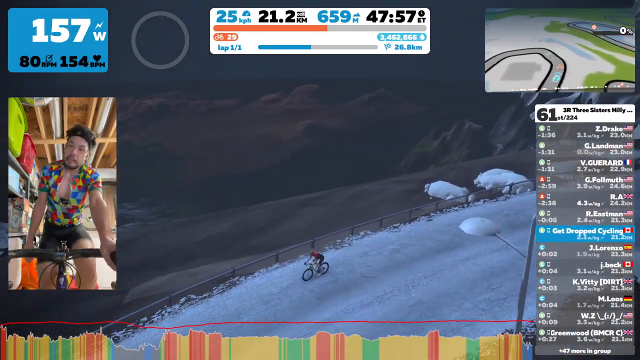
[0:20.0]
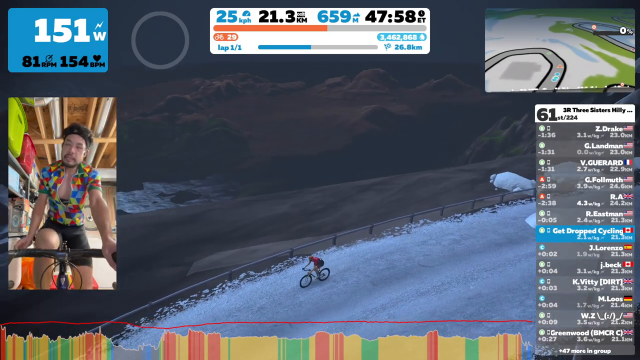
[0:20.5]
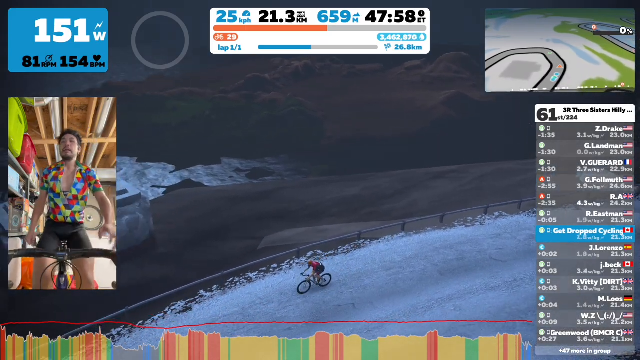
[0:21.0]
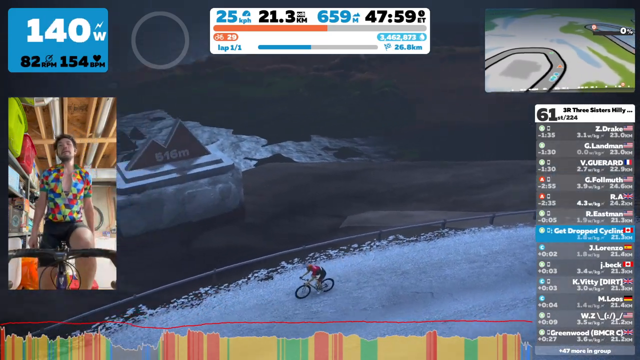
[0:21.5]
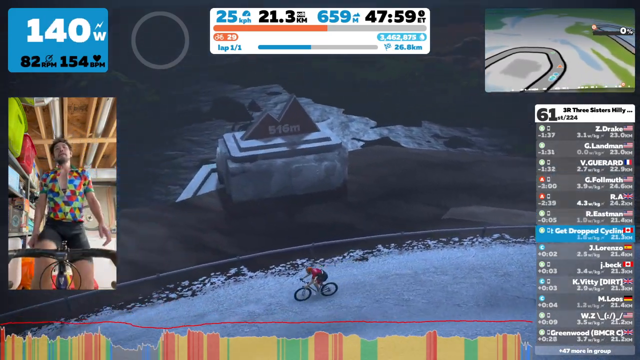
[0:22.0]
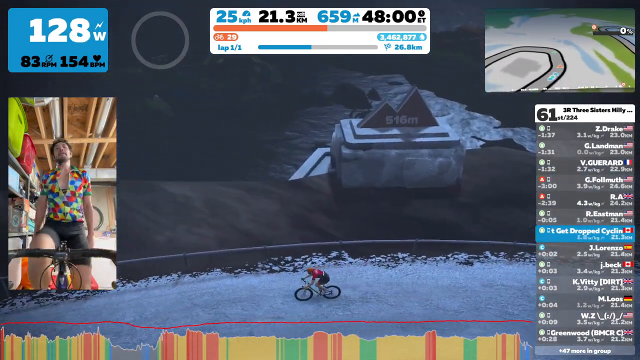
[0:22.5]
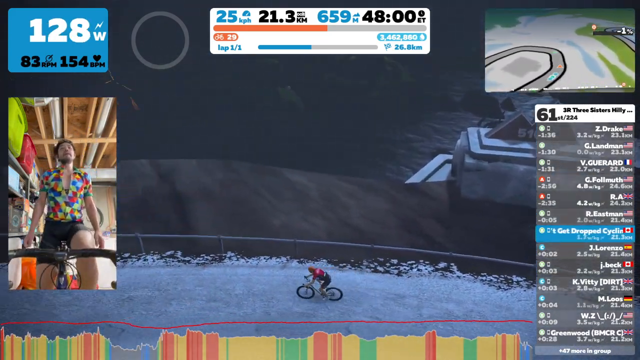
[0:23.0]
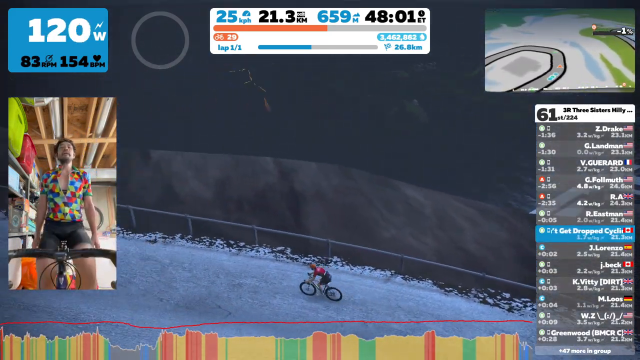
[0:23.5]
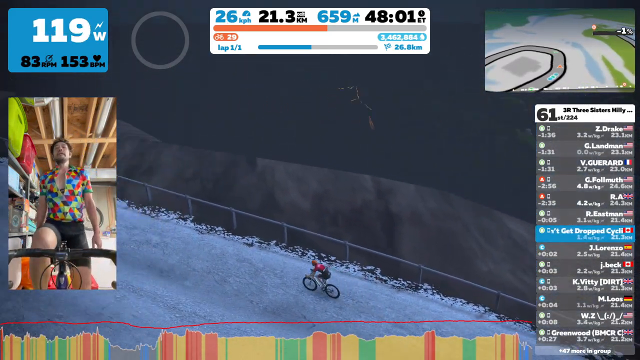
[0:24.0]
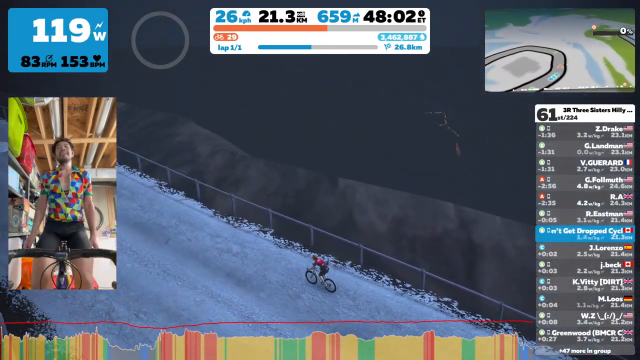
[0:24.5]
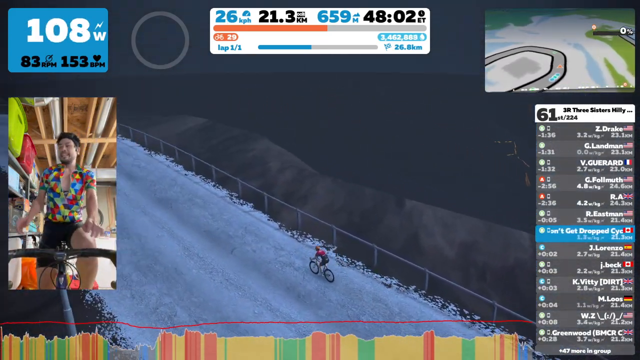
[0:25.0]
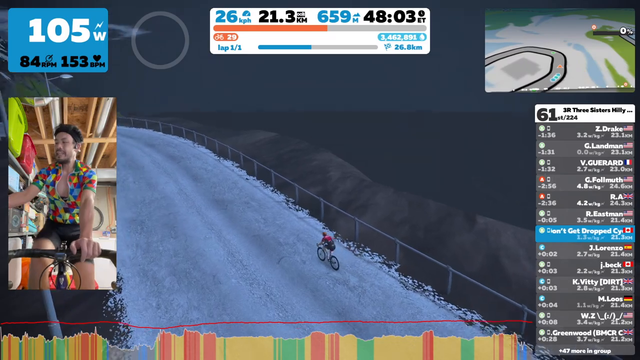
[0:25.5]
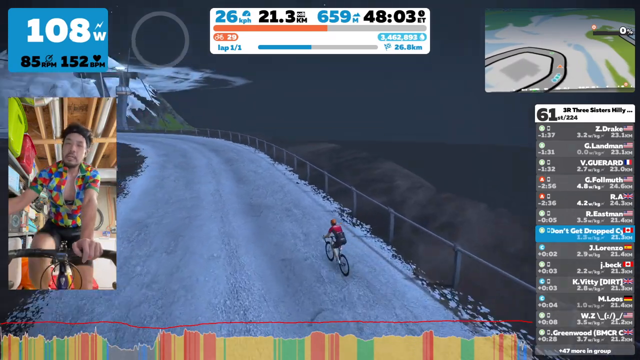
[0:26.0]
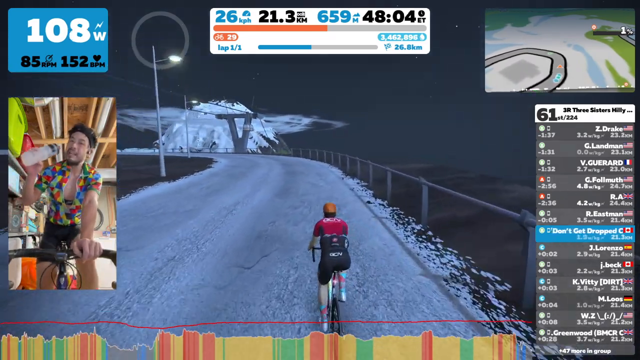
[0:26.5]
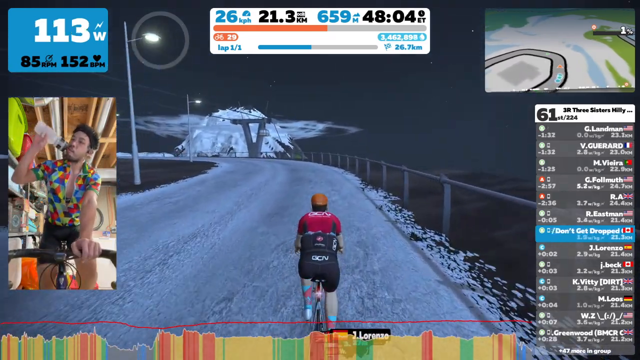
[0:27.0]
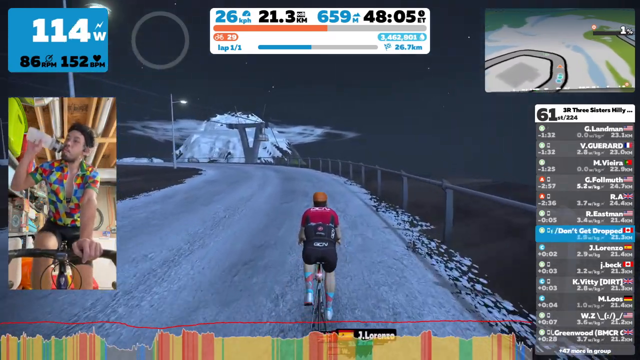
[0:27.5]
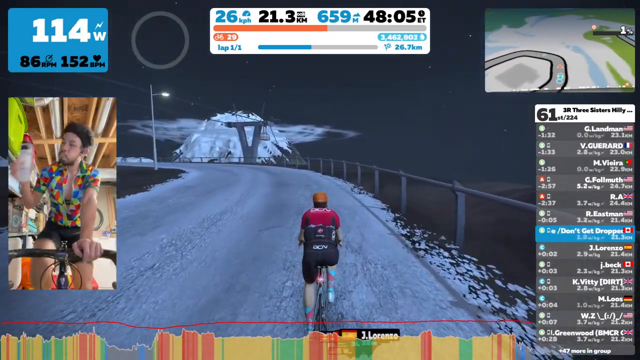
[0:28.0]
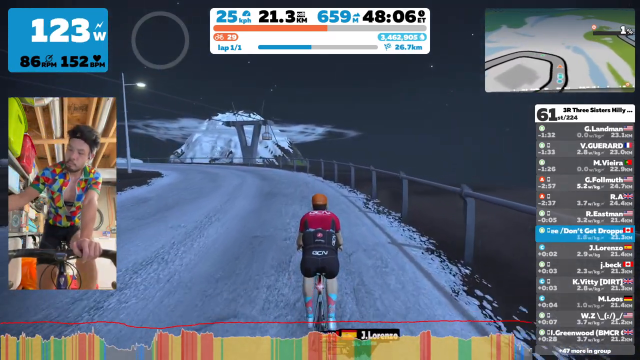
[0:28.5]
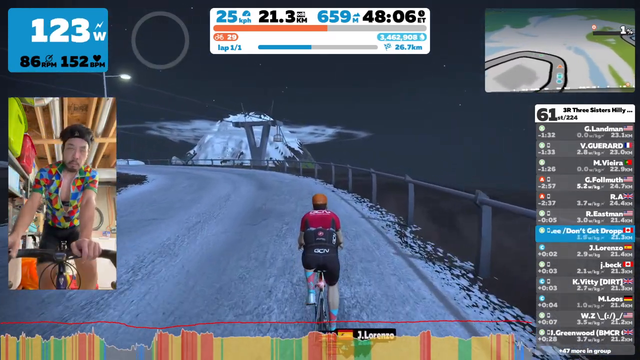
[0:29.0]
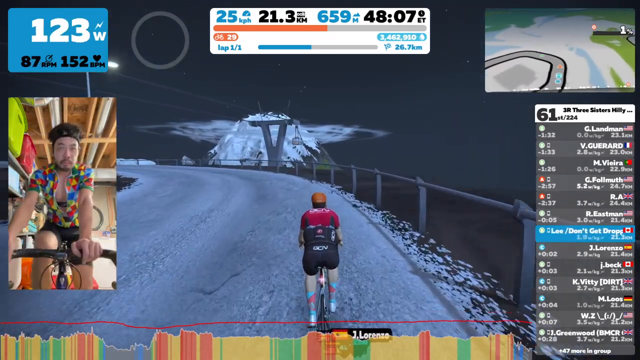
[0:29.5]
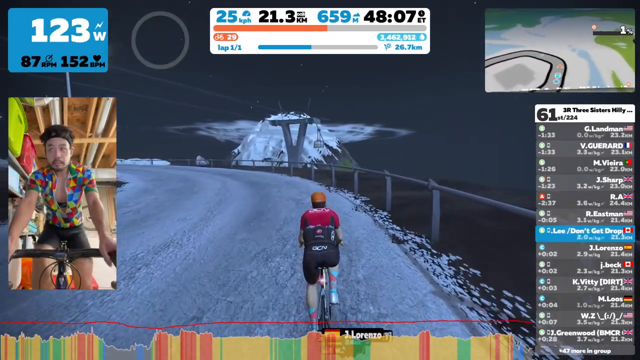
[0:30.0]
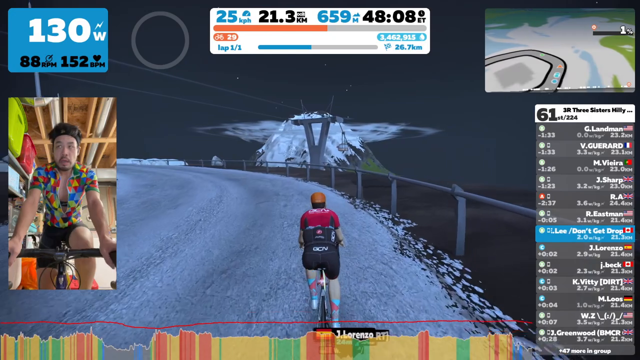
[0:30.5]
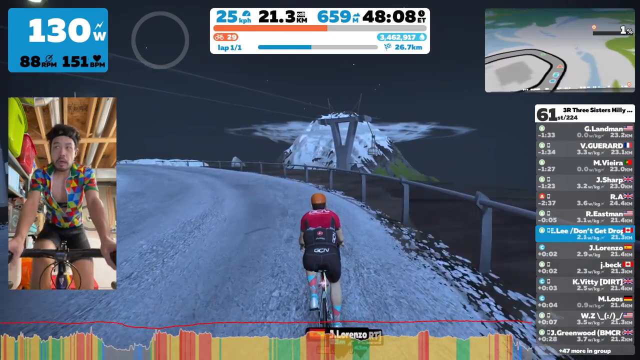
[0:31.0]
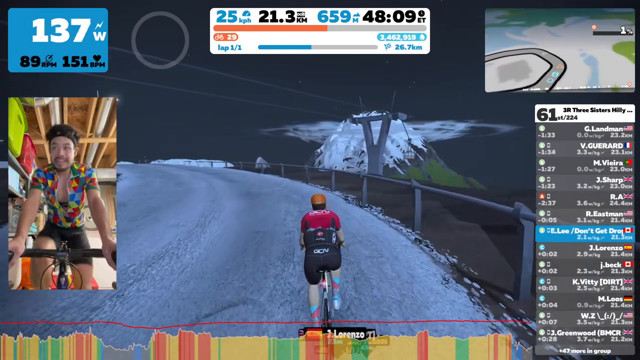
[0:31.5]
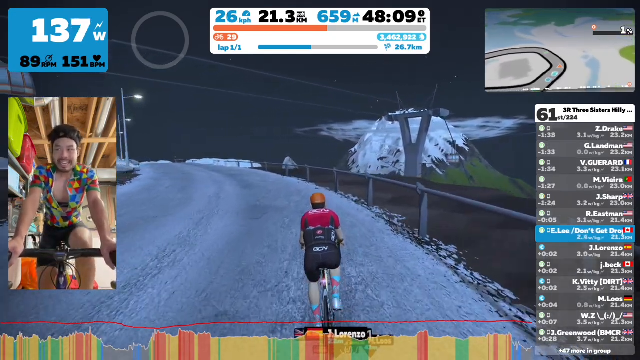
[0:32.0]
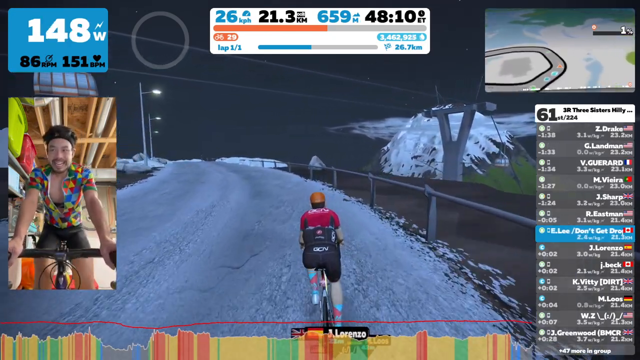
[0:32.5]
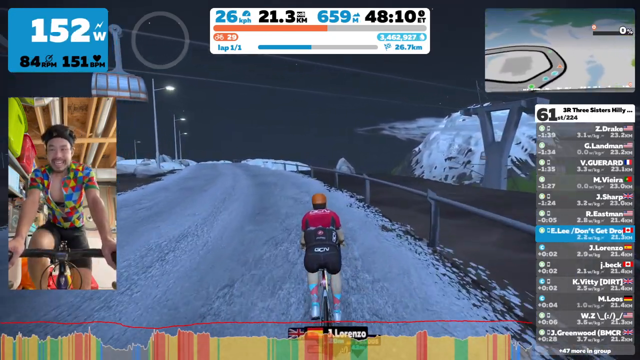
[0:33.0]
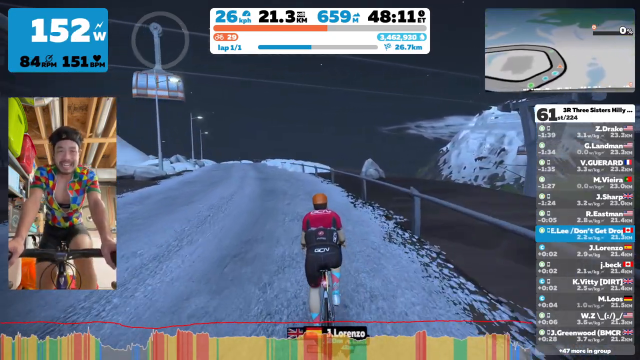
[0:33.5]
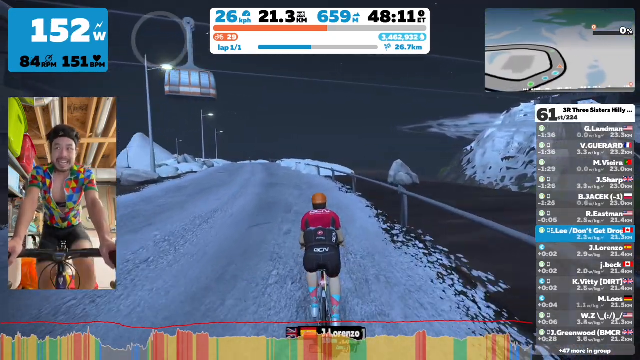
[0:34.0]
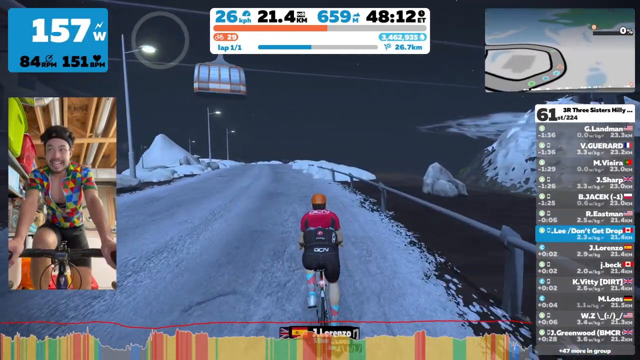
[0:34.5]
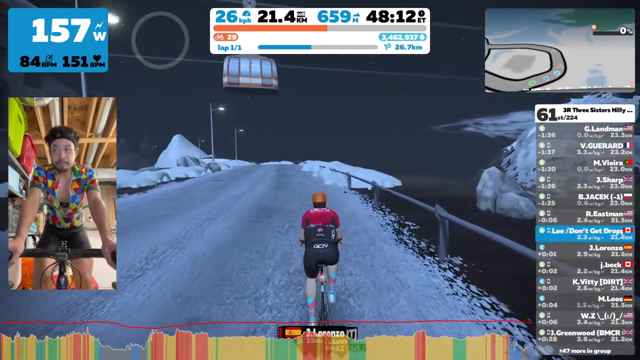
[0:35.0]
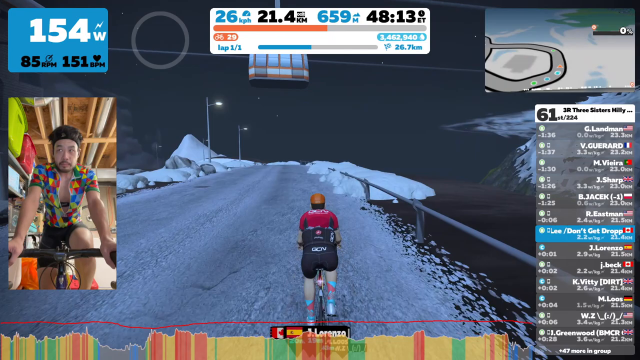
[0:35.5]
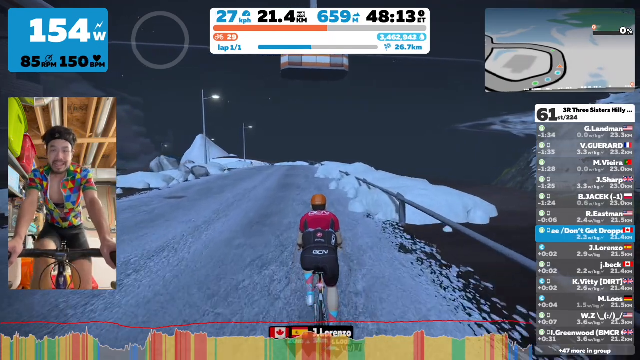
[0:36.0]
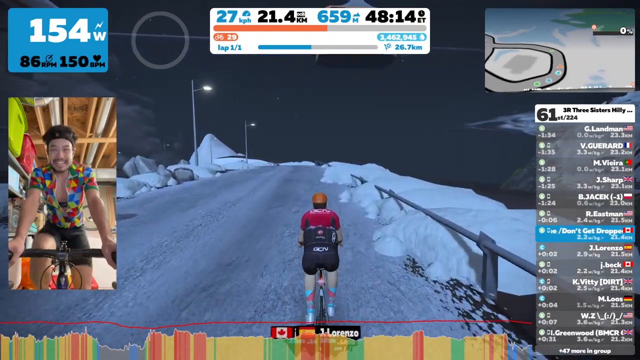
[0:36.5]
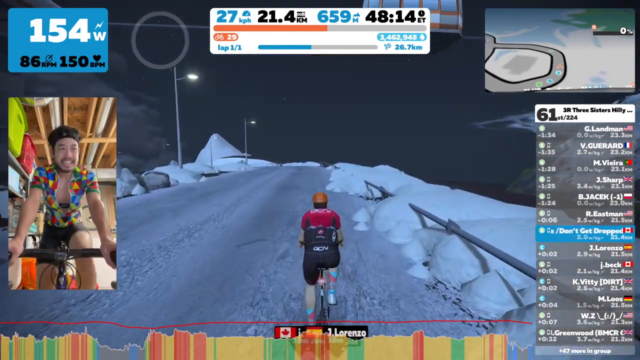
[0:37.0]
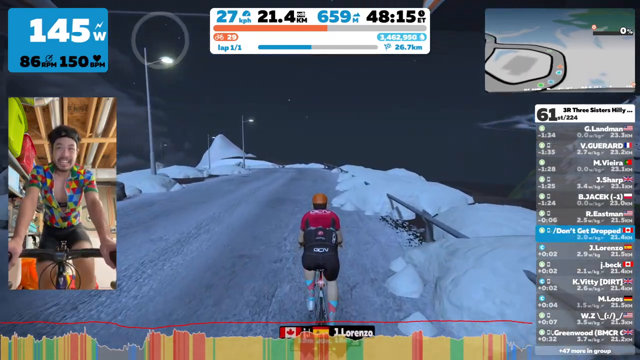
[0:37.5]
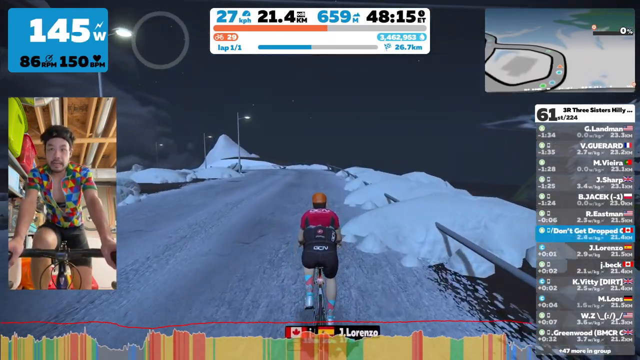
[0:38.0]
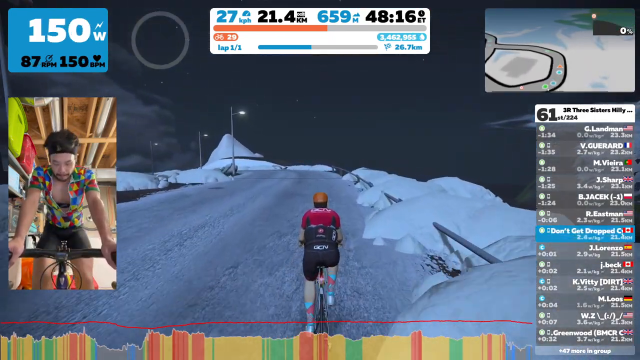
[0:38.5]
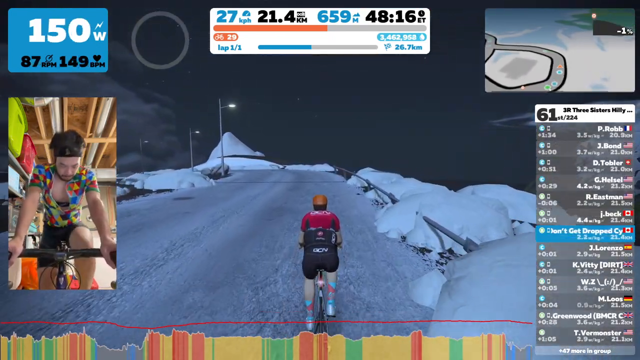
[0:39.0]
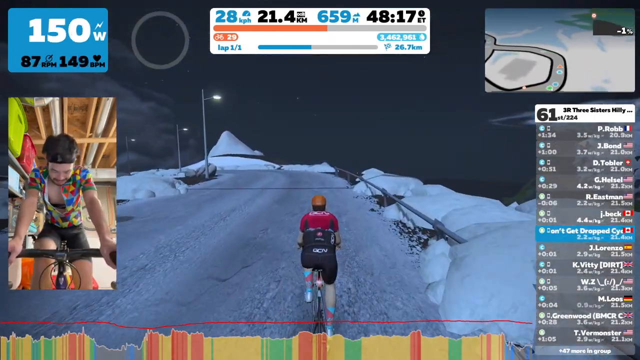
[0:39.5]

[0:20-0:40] The game's bicyclist is shown from a drone-like angle, cycling down a road with a fence at its edge. There appears to be a very large drop-off, so this could be a mountain. The road the bicyclist is going down is frozen over, and the background is very dark; it seems to be dark outside as well. The player grabs a water bottle with his right hand and takes a sip while continuing to pedal, his left hand gripping the handlebar. He sets the water bottle down and keeps pedaling as the bicyclist in the game pedals on. The game character appears to wear a red shirt, an orange hat and black shorts. What look like icebergs appear as the character continues down the road. In the top left corner, text on a light blue background appears to show the wind and direction.